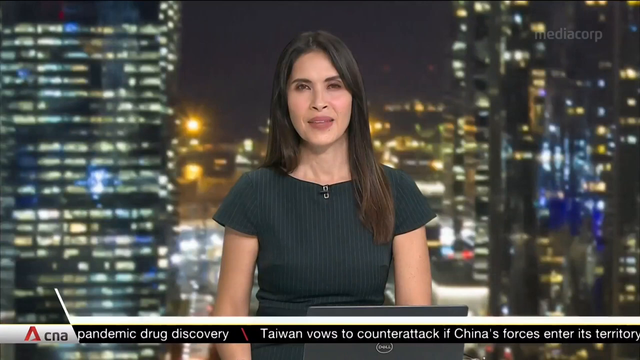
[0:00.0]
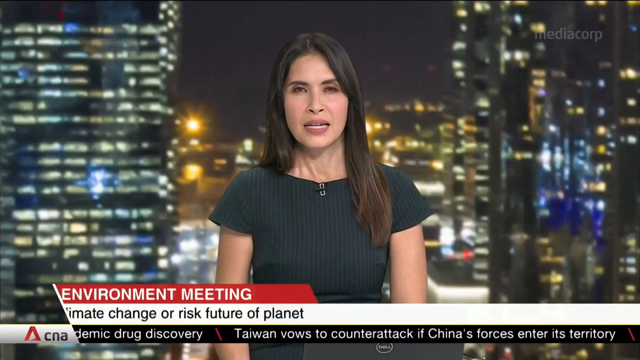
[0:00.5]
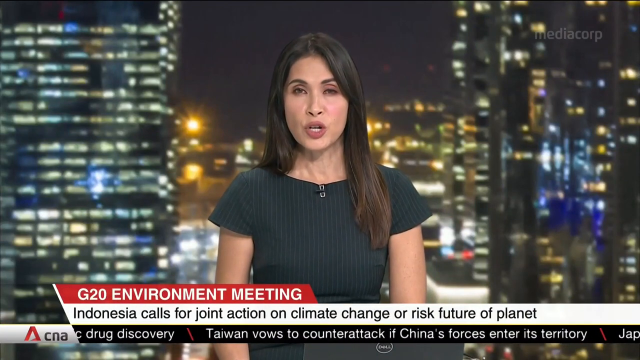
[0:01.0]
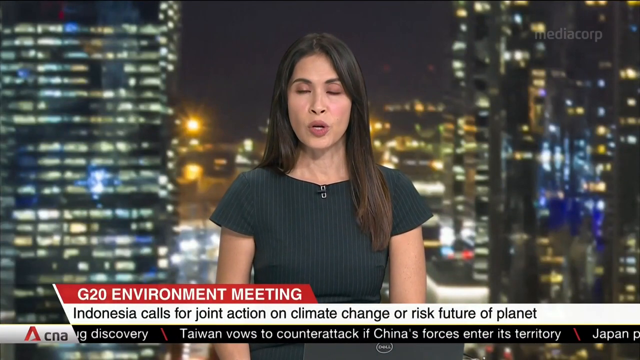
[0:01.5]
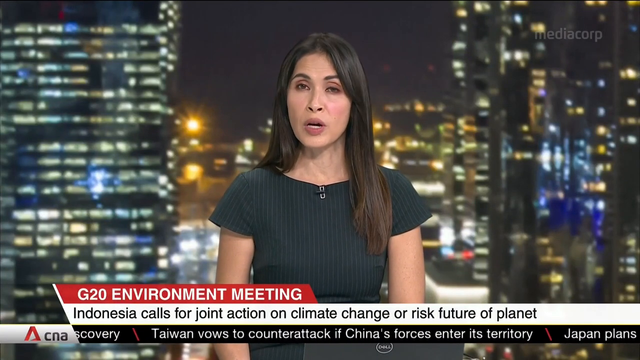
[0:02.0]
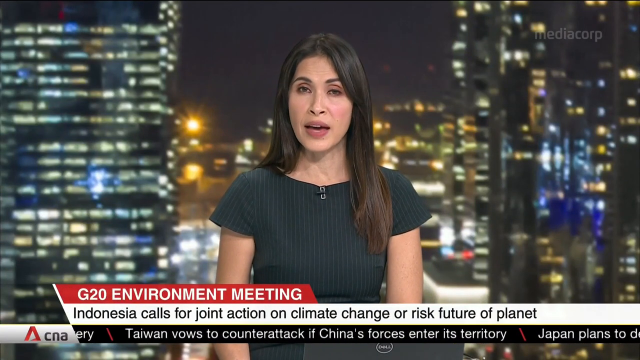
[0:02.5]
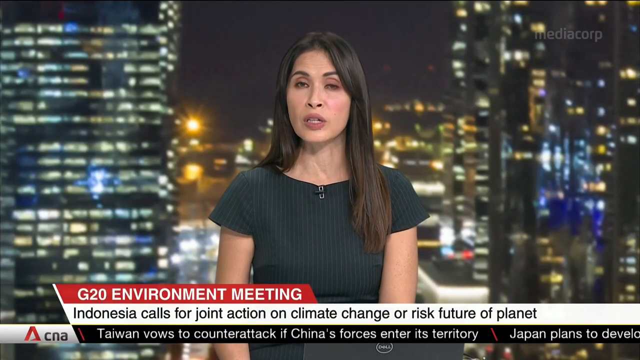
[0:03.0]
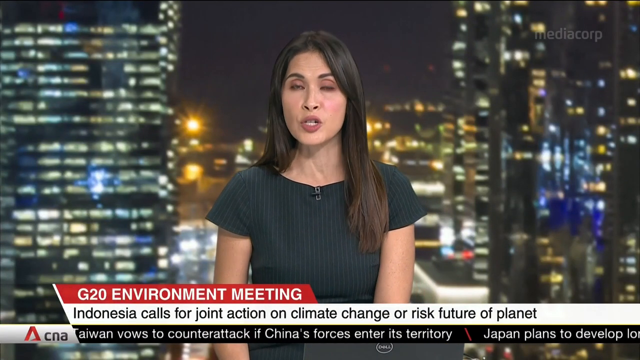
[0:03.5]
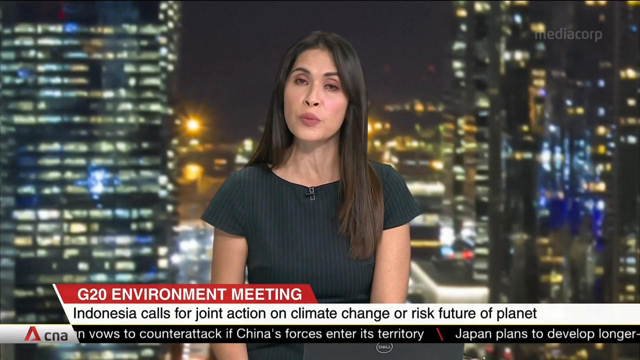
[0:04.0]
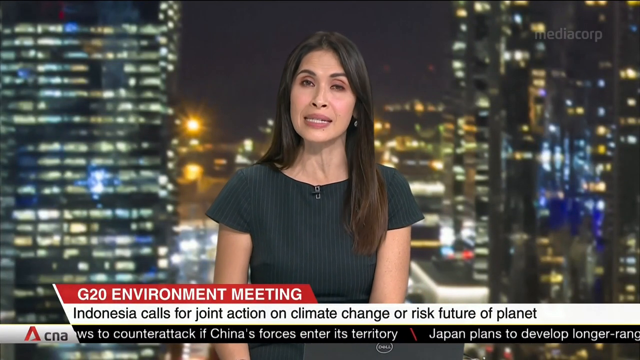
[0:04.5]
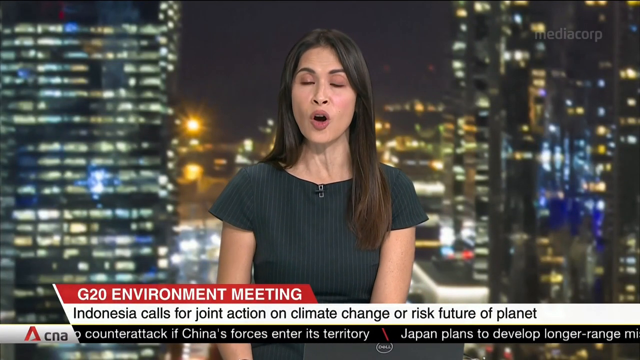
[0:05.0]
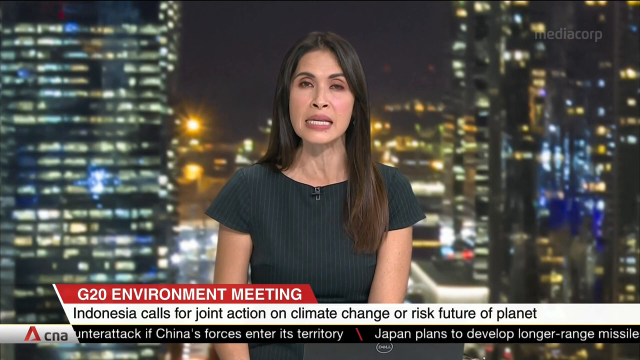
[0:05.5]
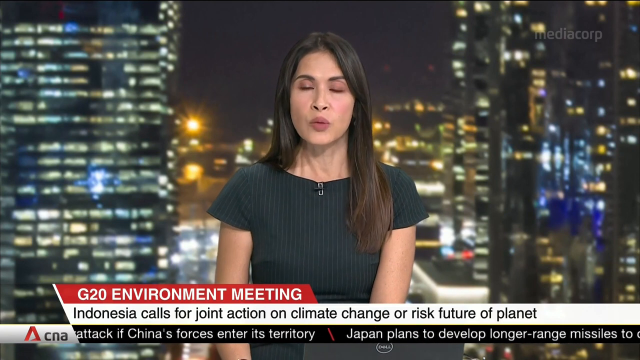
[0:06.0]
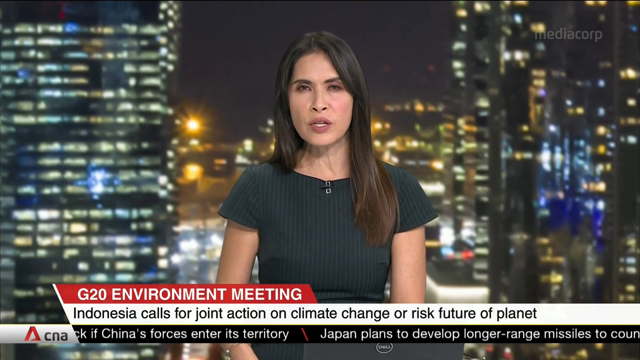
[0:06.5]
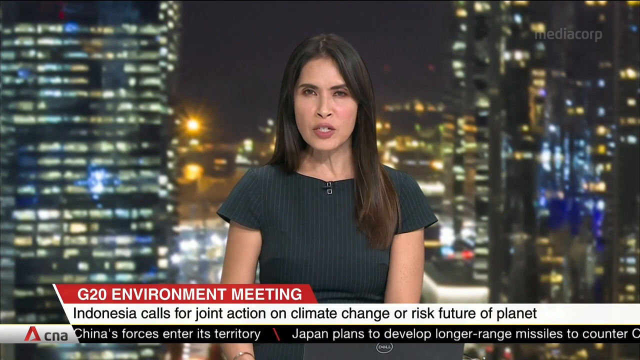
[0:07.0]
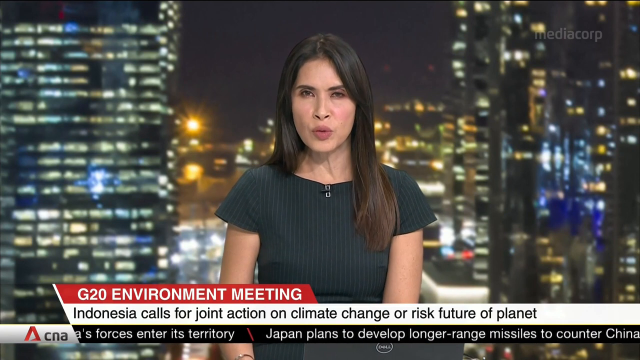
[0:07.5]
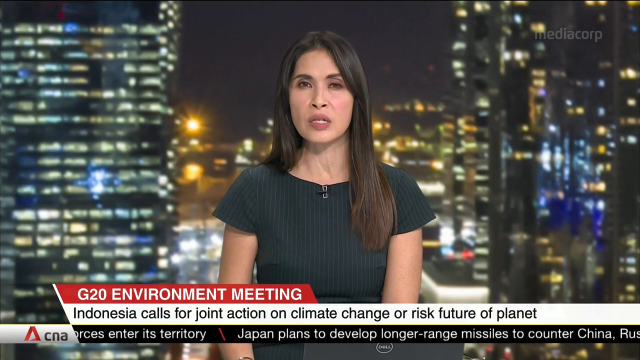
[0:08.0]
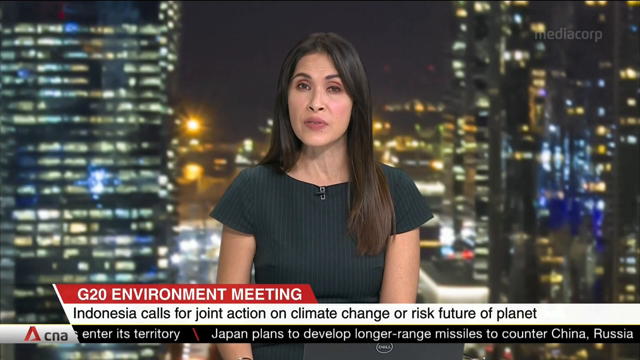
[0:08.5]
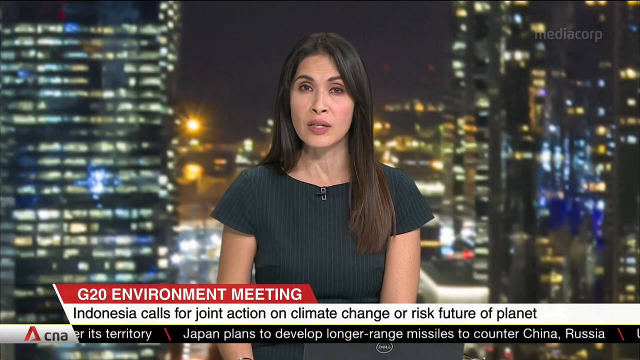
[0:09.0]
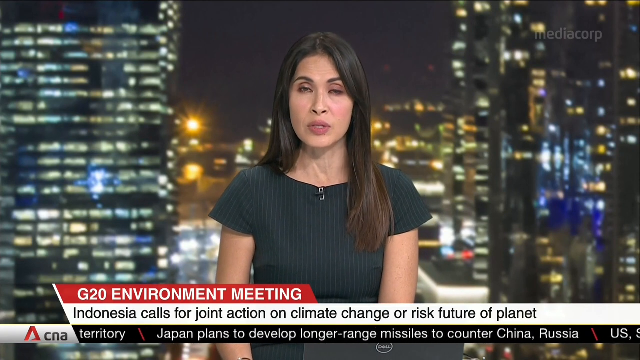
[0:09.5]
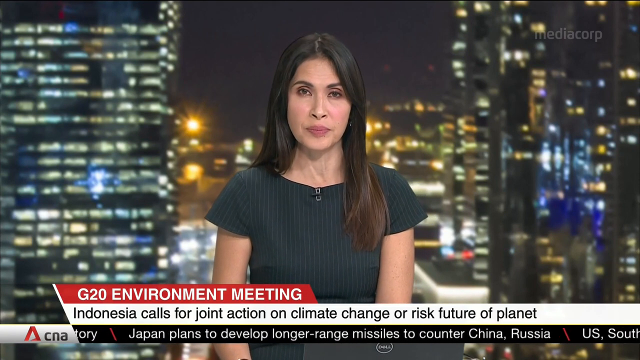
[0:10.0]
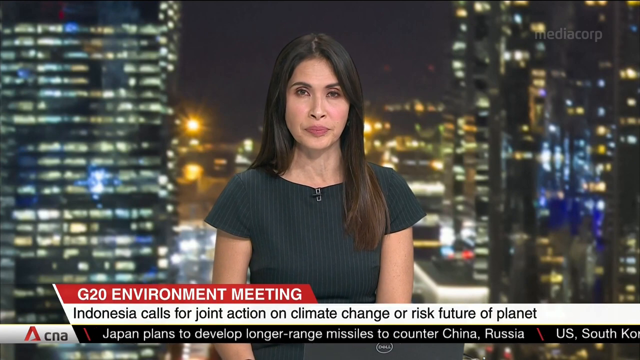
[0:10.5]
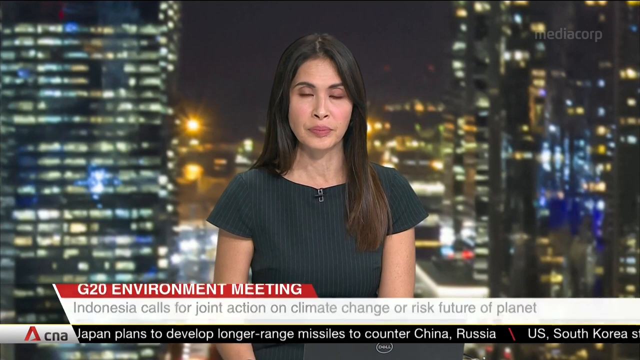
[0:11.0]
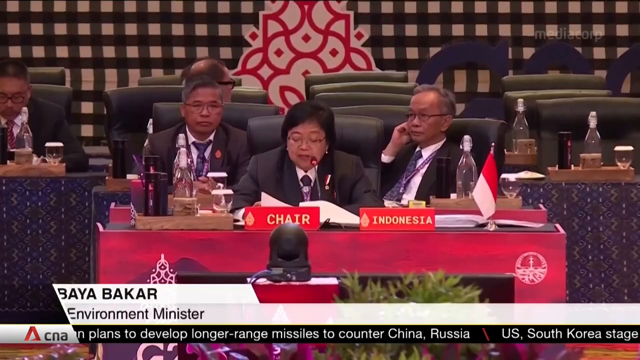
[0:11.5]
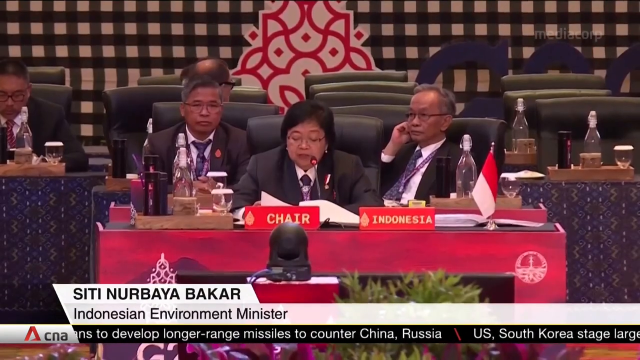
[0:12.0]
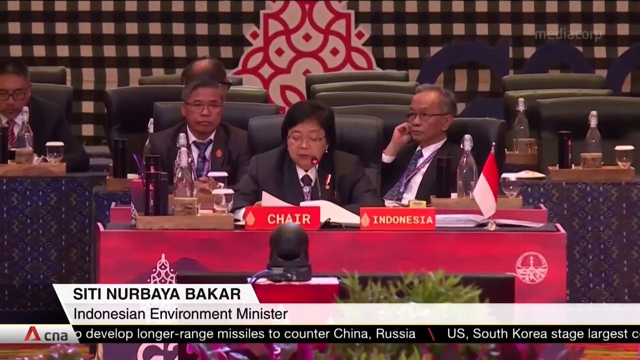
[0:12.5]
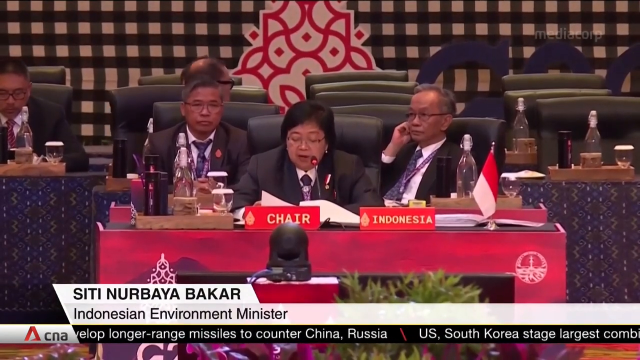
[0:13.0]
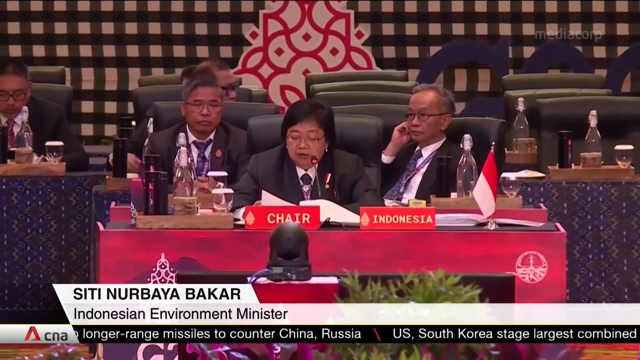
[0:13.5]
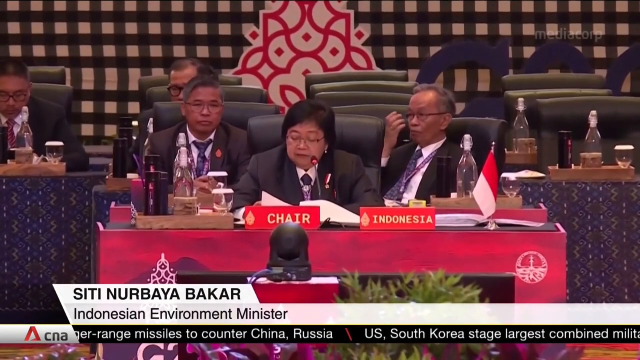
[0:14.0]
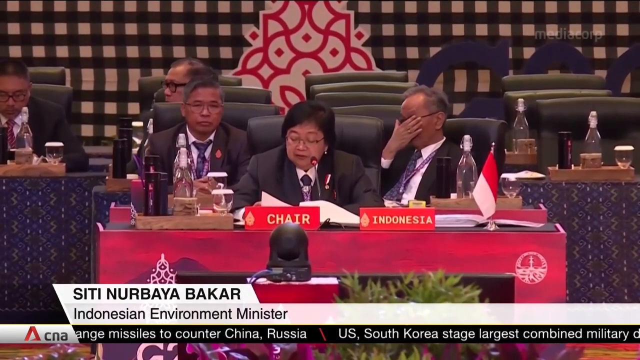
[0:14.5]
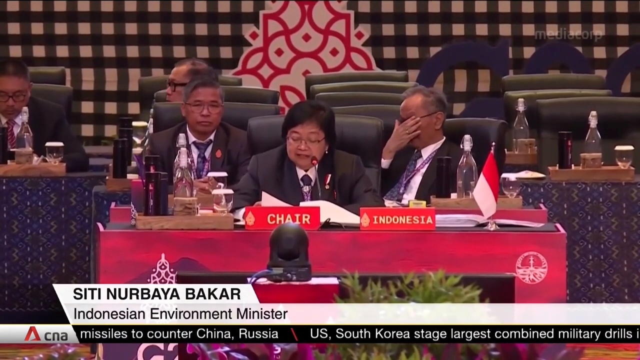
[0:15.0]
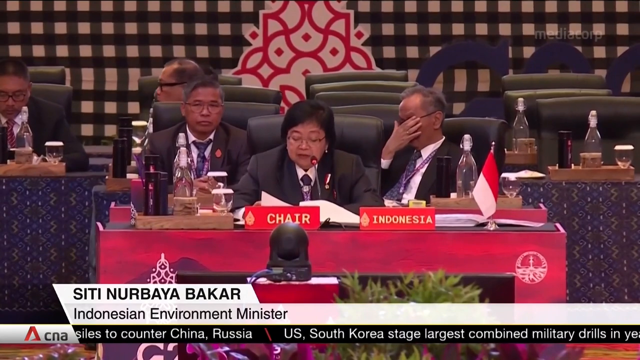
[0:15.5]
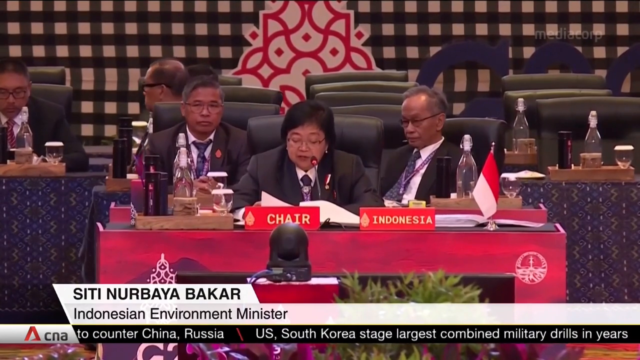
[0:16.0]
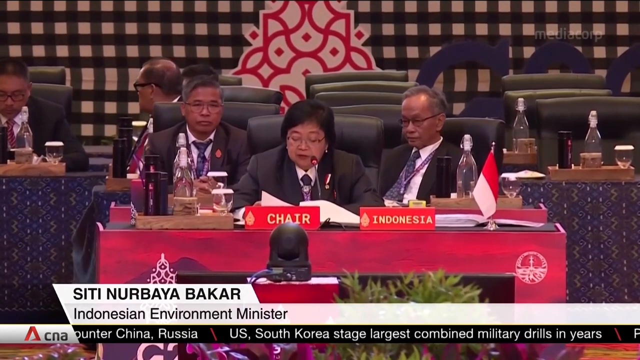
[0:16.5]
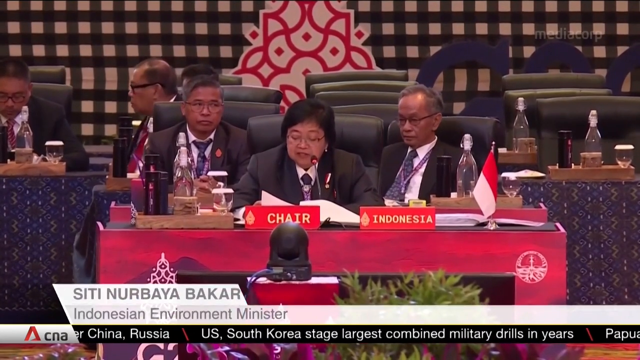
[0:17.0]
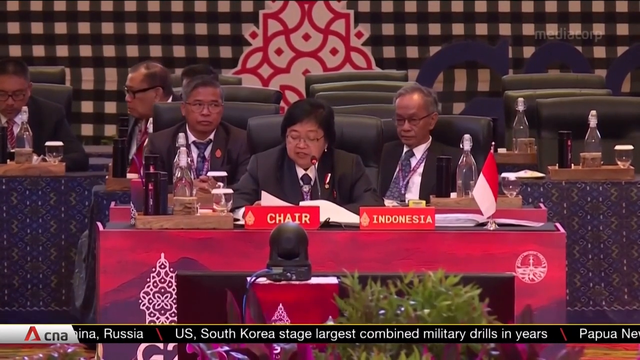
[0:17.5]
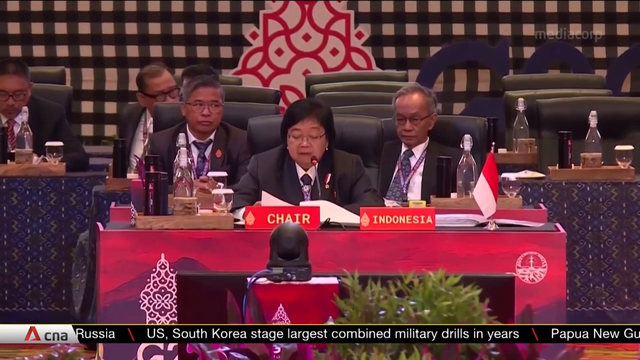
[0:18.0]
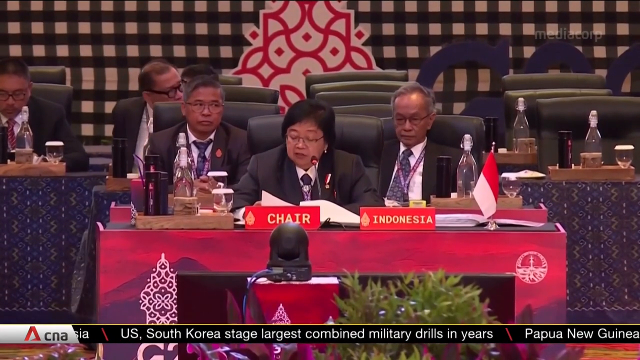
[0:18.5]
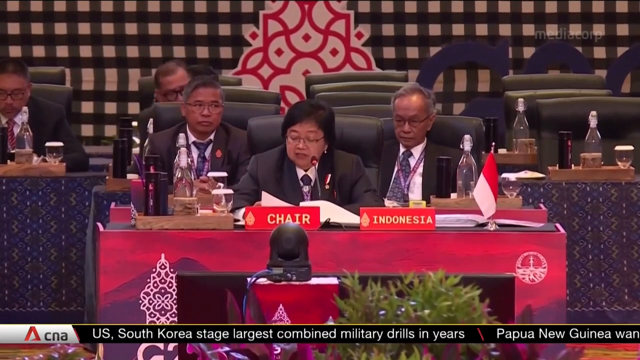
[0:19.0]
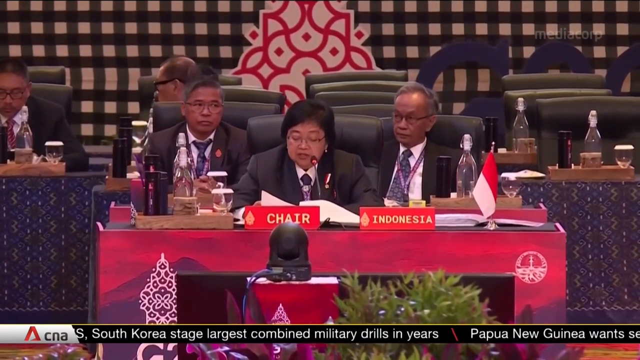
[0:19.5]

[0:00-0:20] What appears to be a female news anchor is in a newsroom. Behind her is either a portrait or a view of a city skyline at night, with various tall buildings, all their windows lit up, and car traffic in the streets below. She appears to be younger to middle-aged, with medium to long black hair that turns brown at the tips, and she wears a simple black dress. She has a fair complexion, appearing to be either Caucasian or very light-skinned Hispanic. She begins to speak toward the camera, looking directly at it, and a news headline appears at the bottom of the screen reading "G20 Environment Meeting, Indonesia Calls for Joint Action on Climate Change or Risk Future of Planet." She speaks seriously, making sharp facial expressions and enunciating her points. After a brief pause, the video cuts to what is most likely a view of the G20 meeting in question, where three middle-aged to older Asian-looking representatives sit at a table in office chairs. On the table in front of them is a sign reading "Indonesia." The person in the center is closest to the table, while the other two sit slightly back. The person in the center looks down at the table and reads, most likely from a card or script.